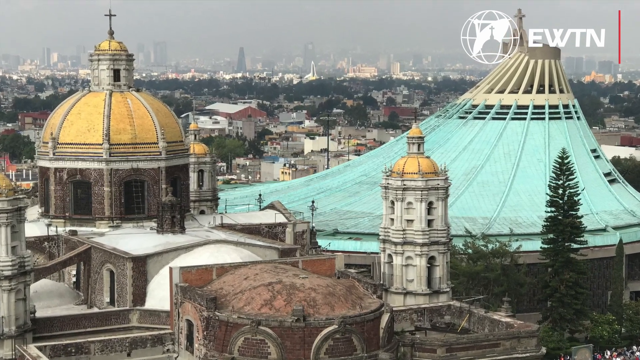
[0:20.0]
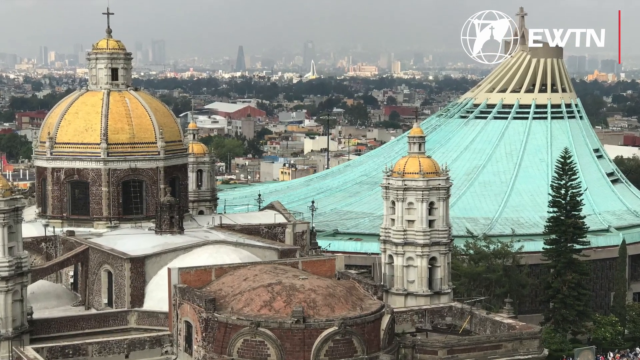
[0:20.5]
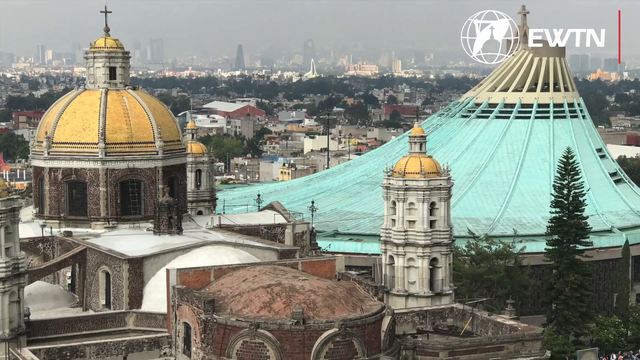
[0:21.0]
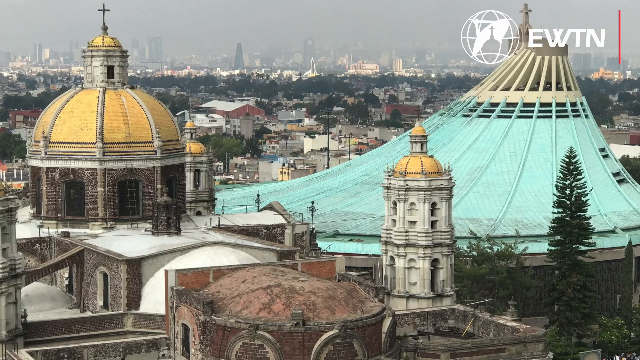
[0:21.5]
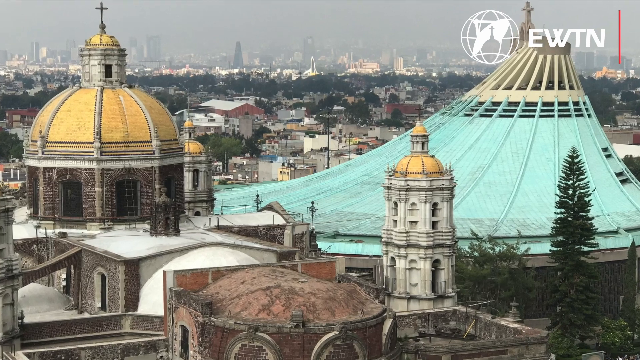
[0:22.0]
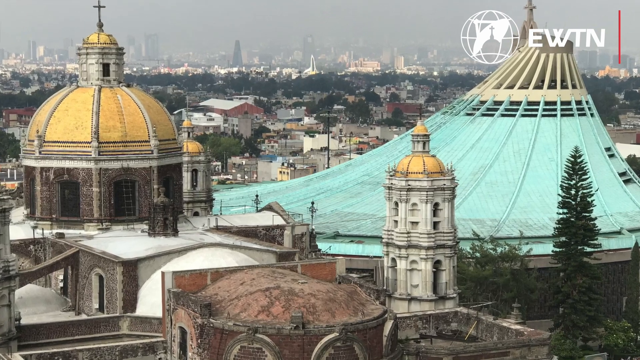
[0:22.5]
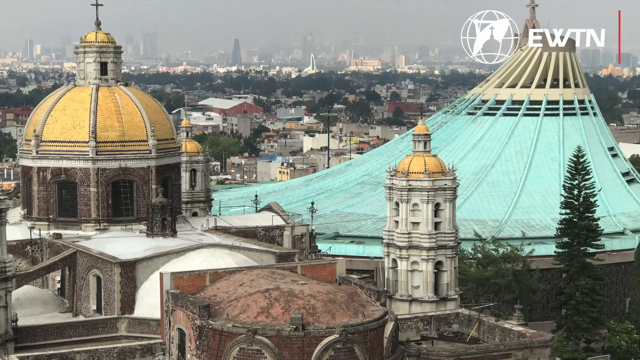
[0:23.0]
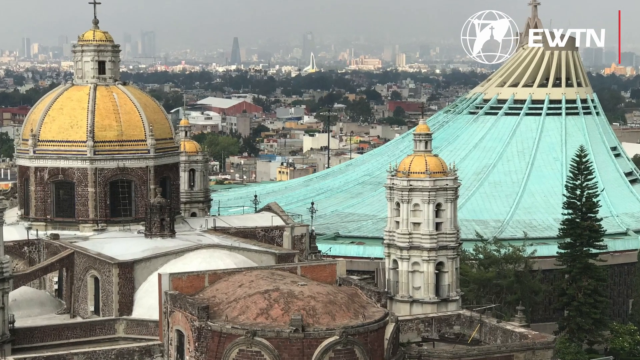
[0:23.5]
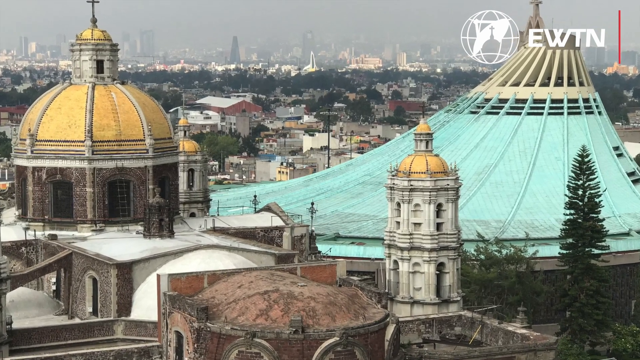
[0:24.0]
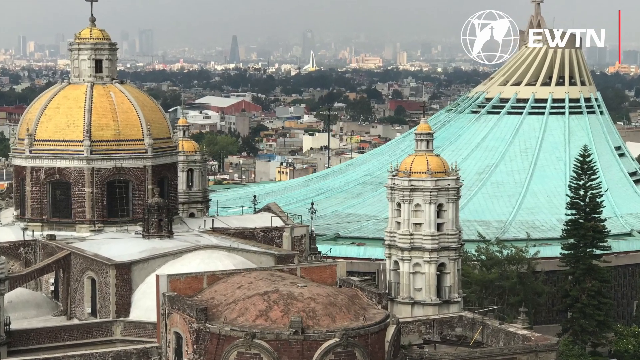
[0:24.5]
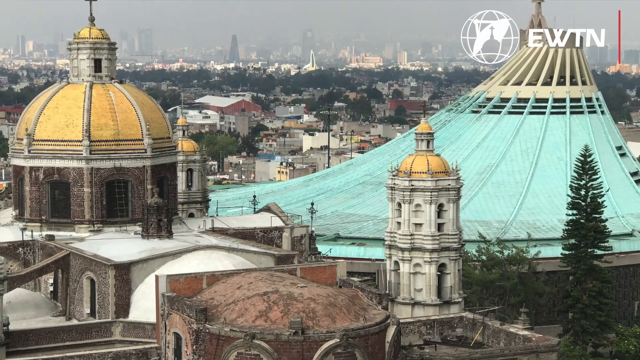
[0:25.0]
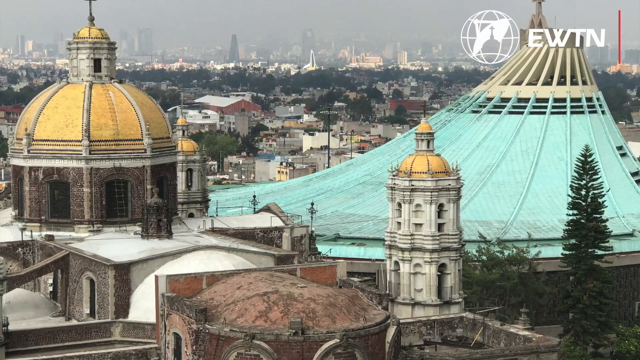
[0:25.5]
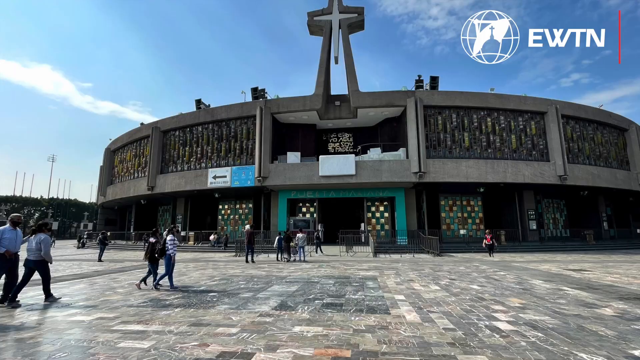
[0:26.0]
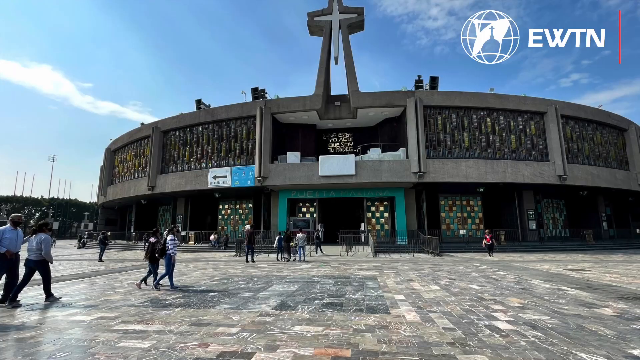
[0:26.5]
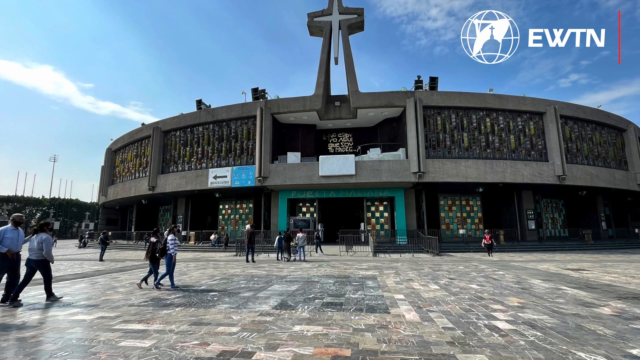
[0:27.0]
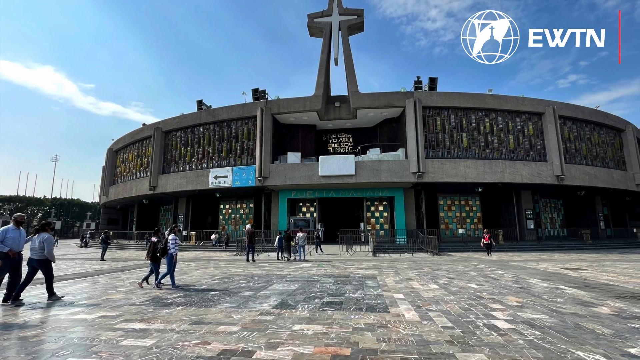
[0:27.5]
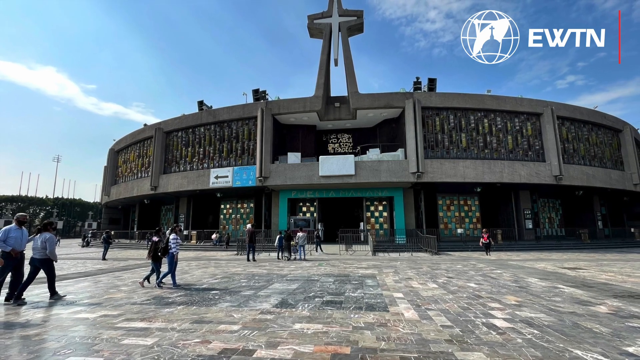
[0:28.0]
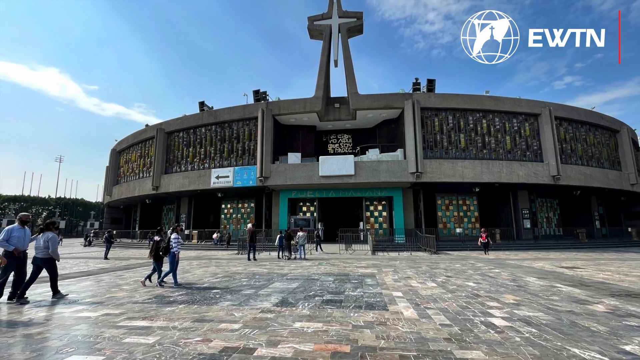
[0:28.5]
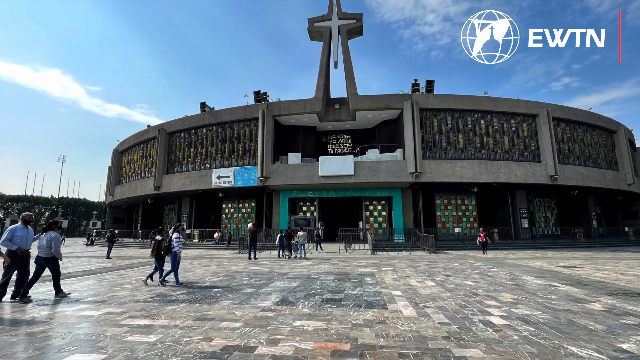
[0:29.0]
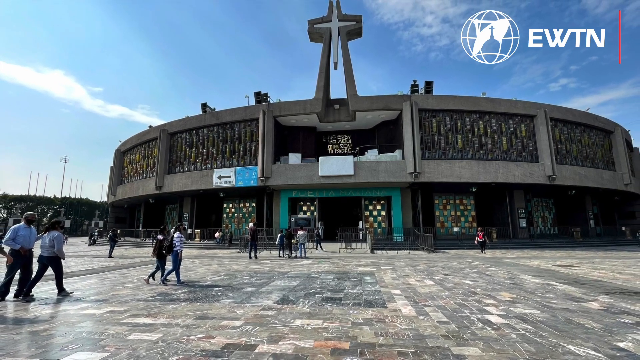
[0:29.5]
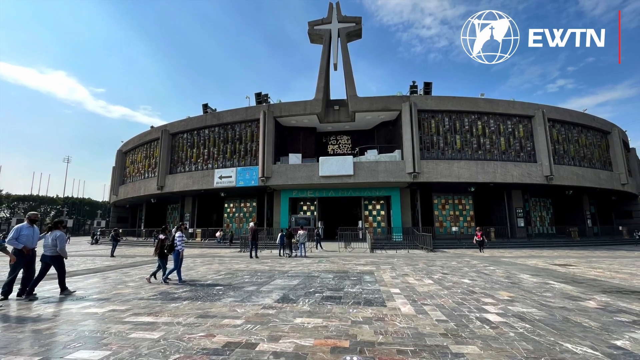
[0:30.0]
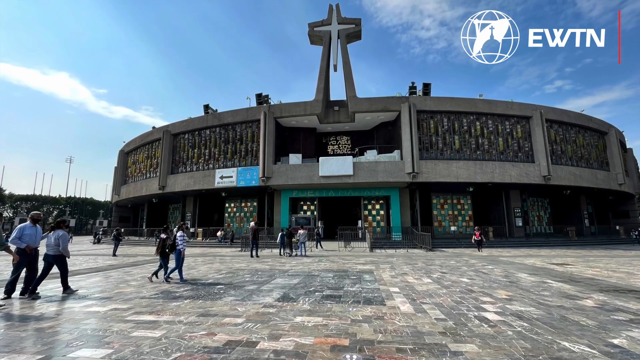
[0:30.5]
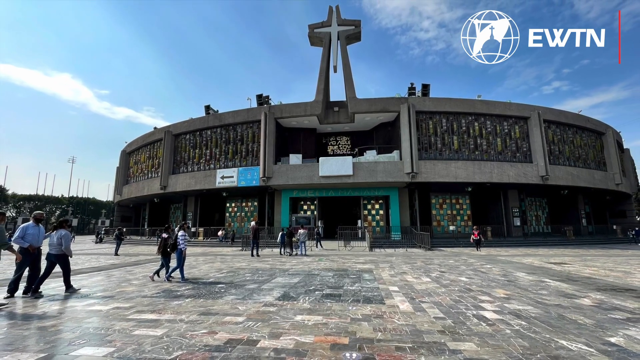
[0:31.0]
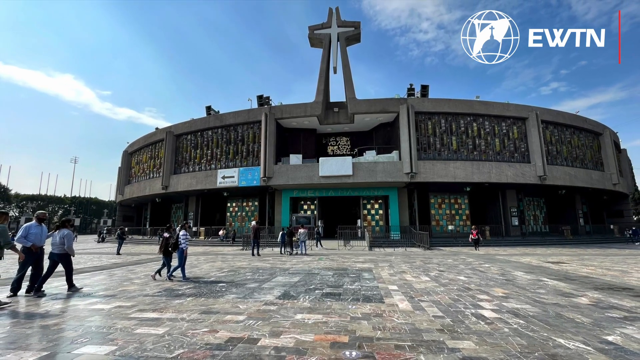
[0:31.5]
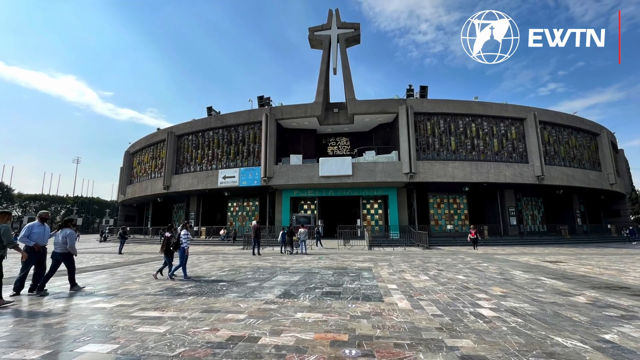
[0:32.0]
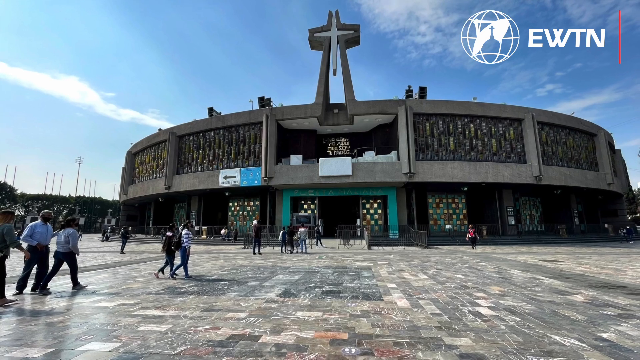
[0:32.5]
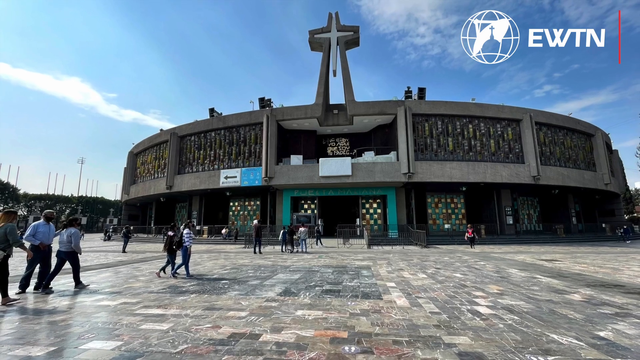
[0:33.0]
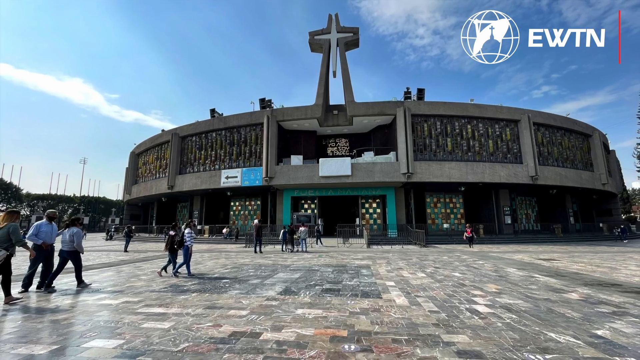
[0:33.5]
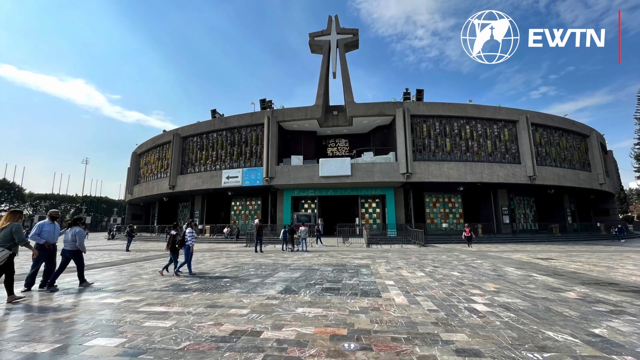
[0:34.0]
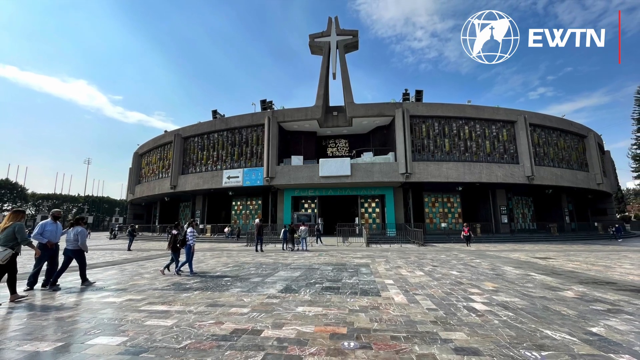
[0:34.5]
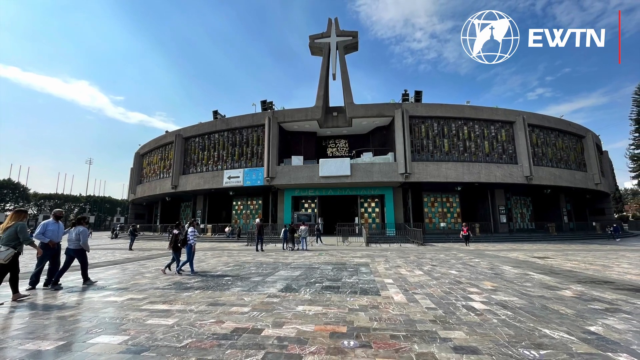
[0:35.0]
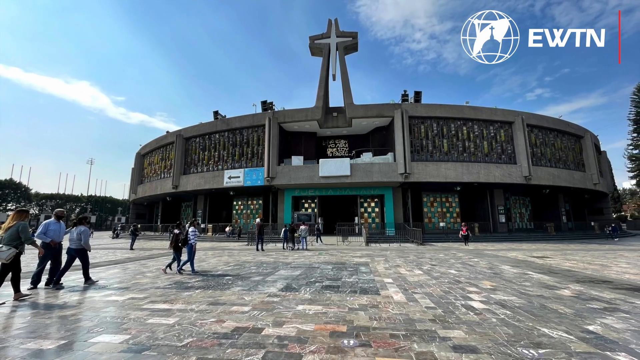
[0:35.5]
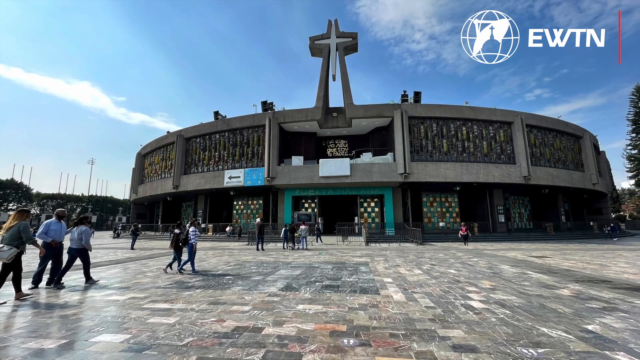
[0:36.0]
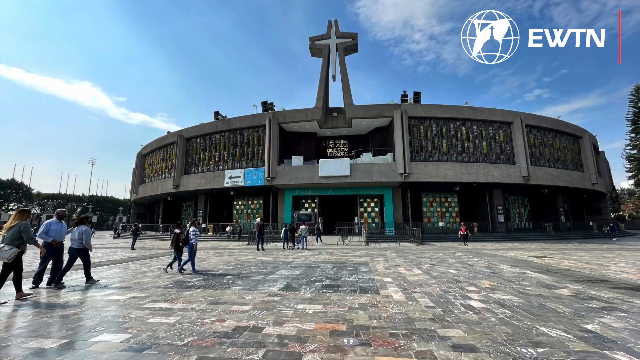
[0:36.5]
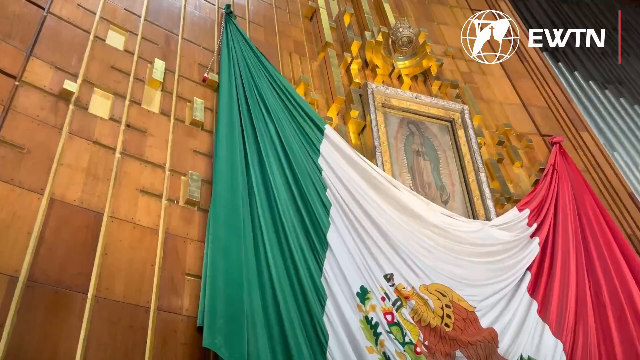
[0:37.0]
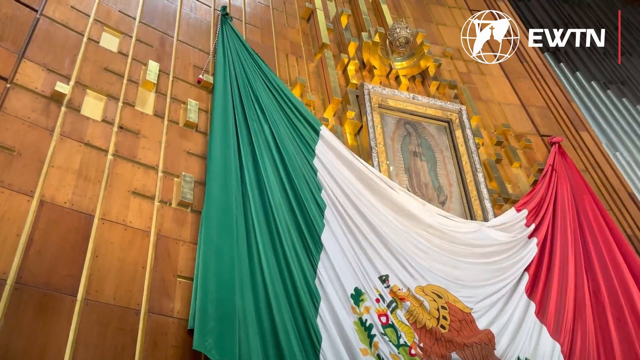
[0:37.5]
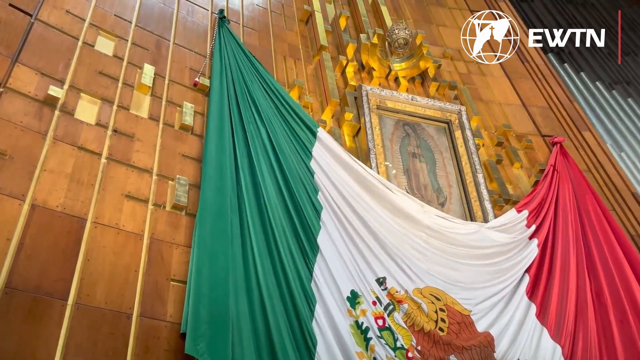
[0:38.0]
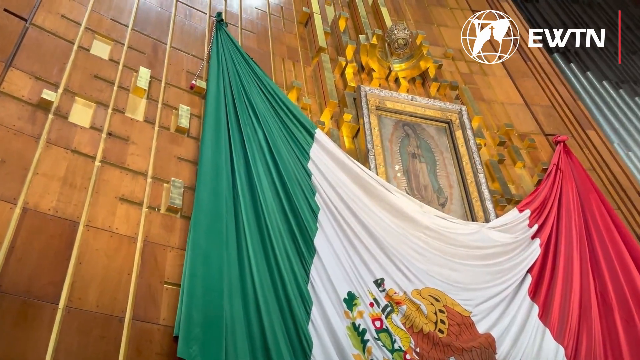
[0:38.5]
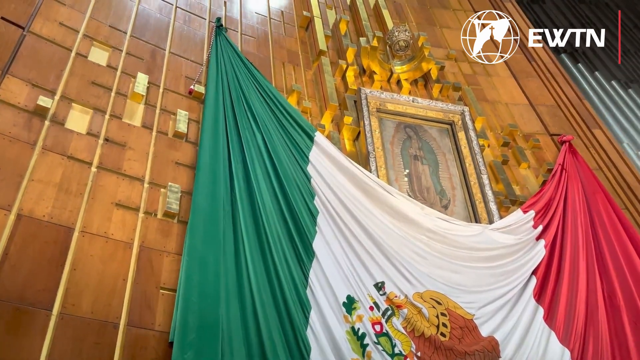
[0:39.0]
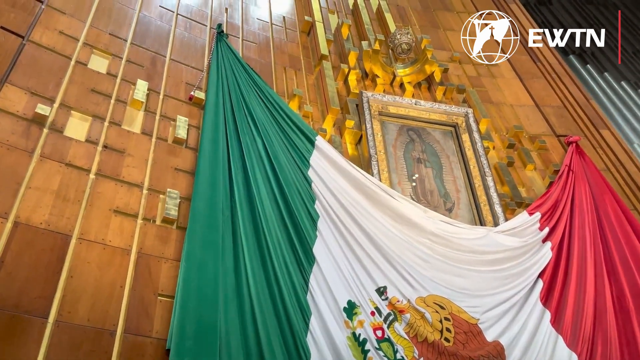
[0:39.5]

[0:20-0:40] The video zooms in slightly, not focusing on anything in particular, before going back to a picture of the front of a church shaped like a circle. There is a cross at the top, and the church appears to have two floors. The entrance is surrounded by kind of a green archway, and individuals in the still picture are walking toward the church entrance. The video pans out of the still and moves to a scene with a flag hanging on a wall. The flag is green on the left, white in the middle and red on the right, and there appears to be some type of design in the white middle part. Right above the flag is a frame with a photo inside that appears to be the Virgin Mary. The camera pans from left to right; this is likely a photo hung indoors.